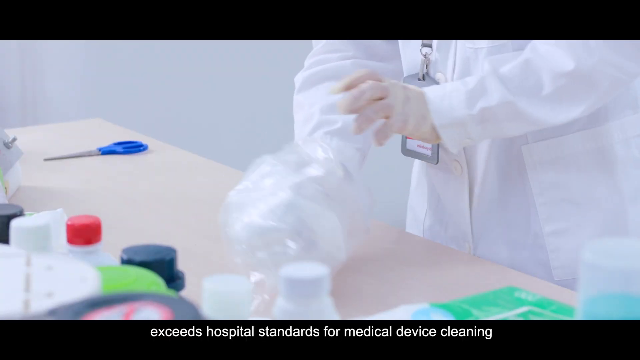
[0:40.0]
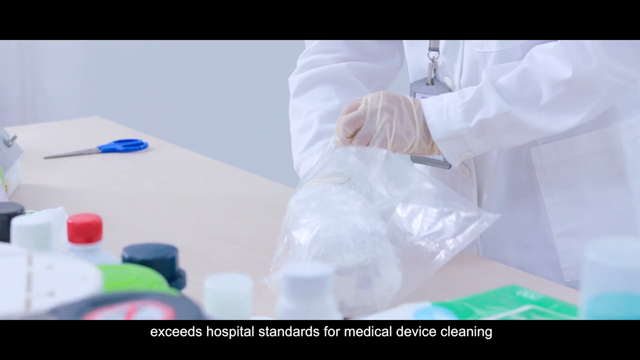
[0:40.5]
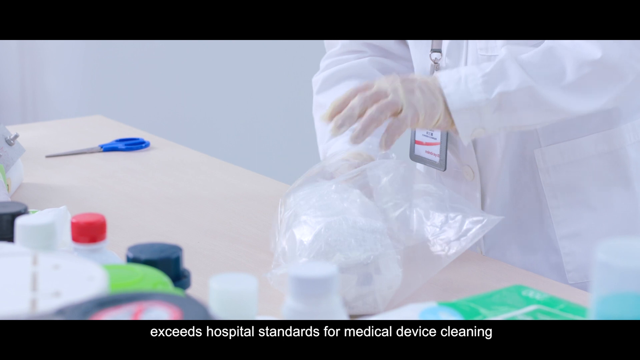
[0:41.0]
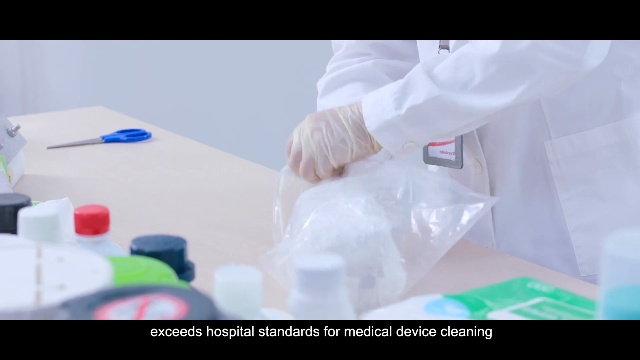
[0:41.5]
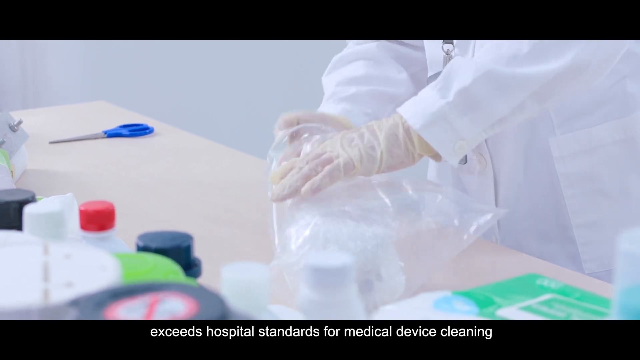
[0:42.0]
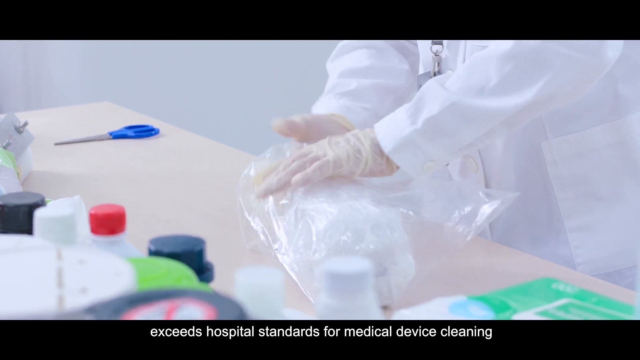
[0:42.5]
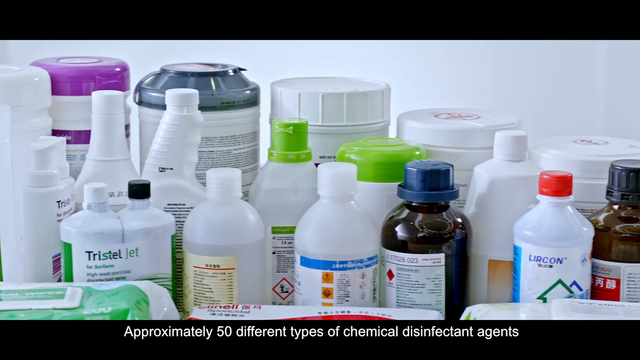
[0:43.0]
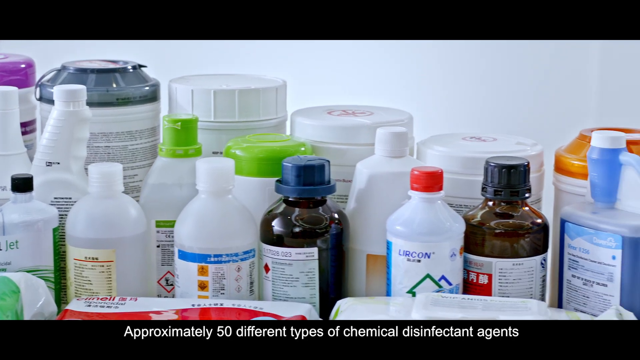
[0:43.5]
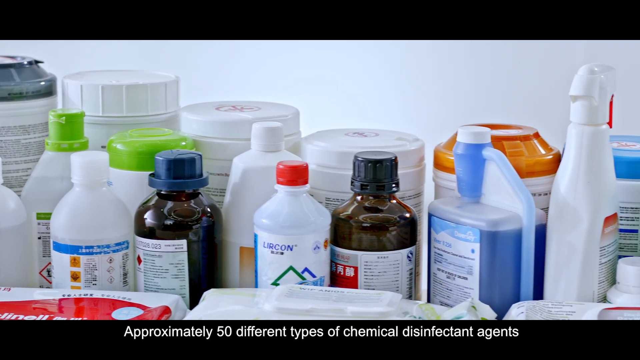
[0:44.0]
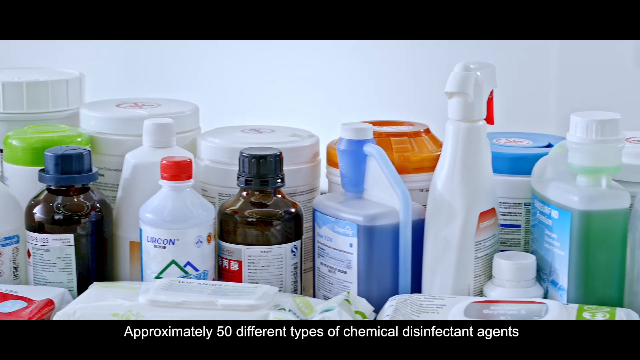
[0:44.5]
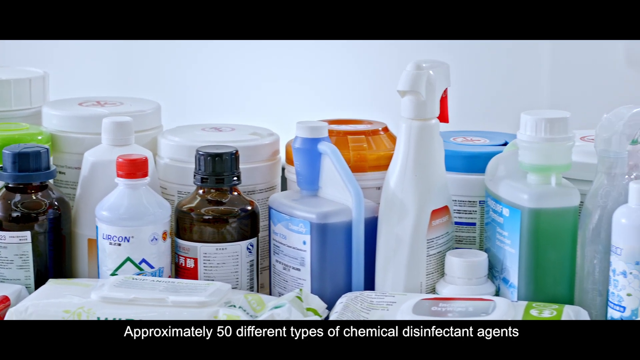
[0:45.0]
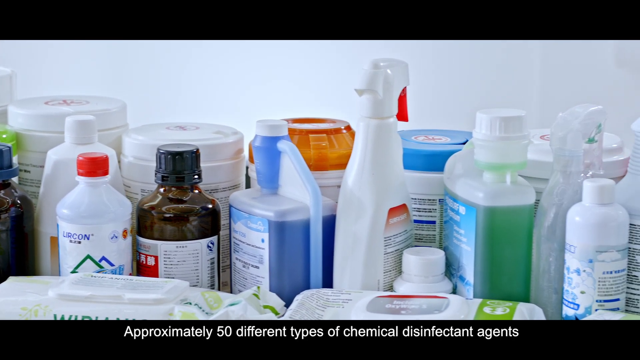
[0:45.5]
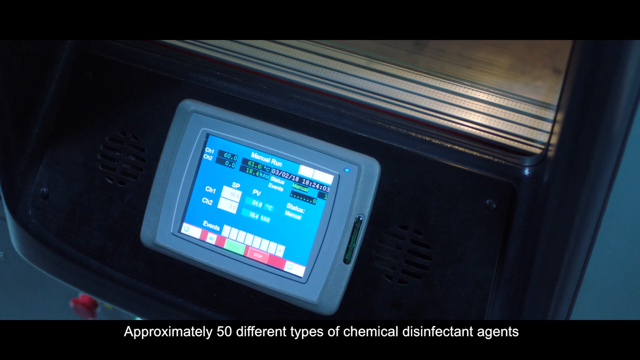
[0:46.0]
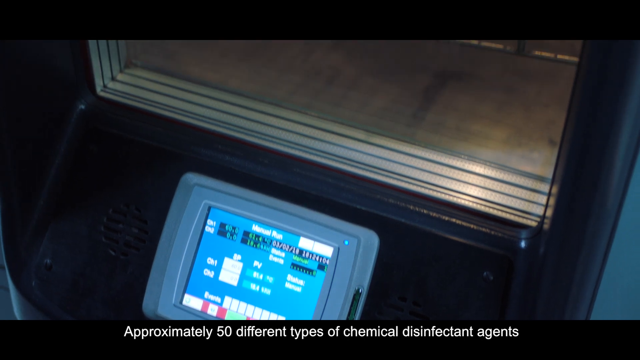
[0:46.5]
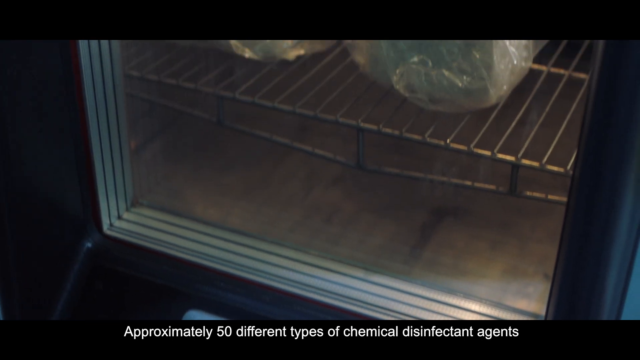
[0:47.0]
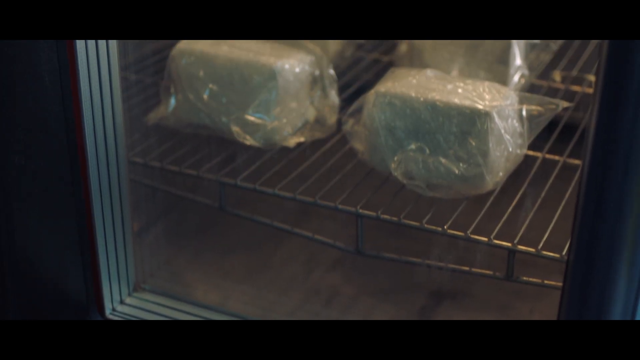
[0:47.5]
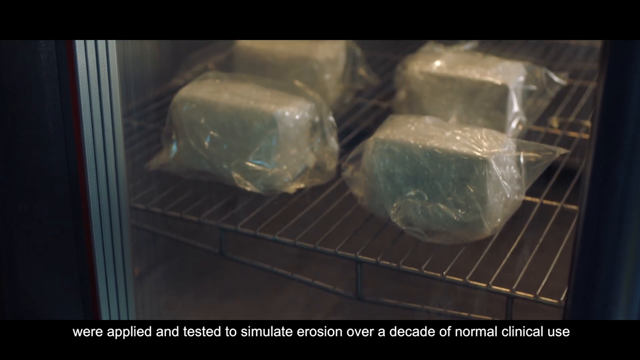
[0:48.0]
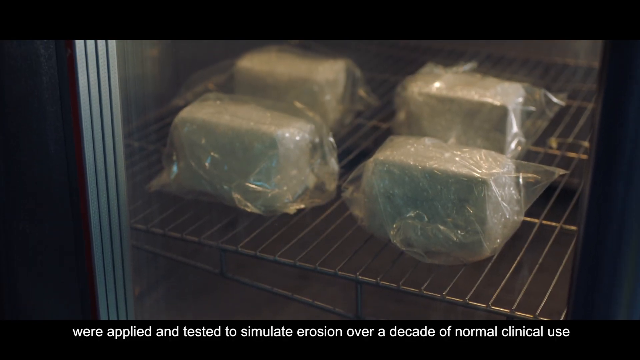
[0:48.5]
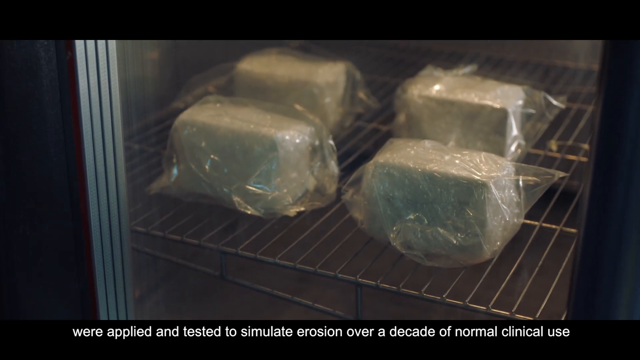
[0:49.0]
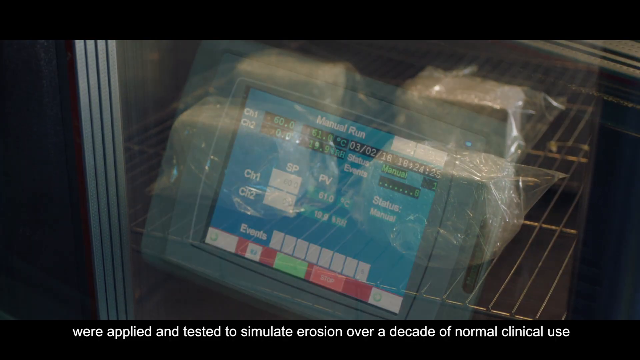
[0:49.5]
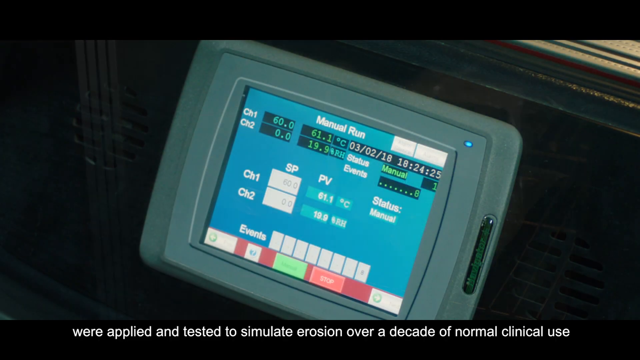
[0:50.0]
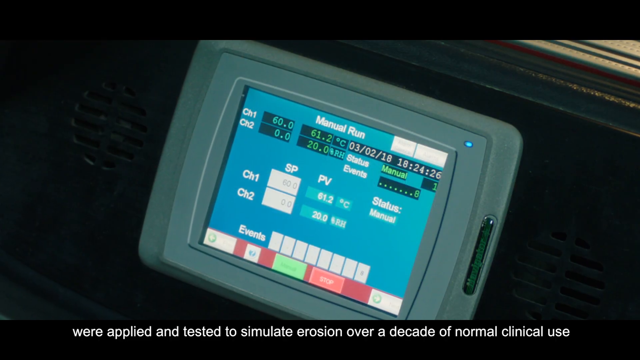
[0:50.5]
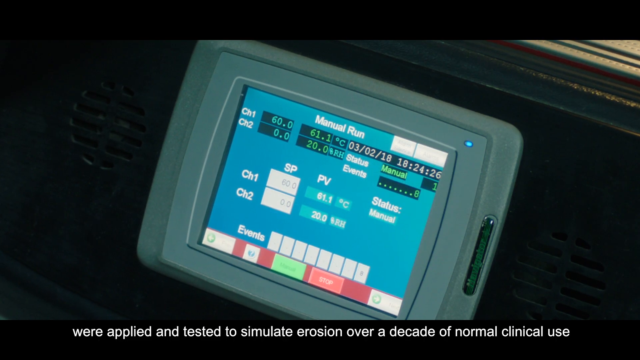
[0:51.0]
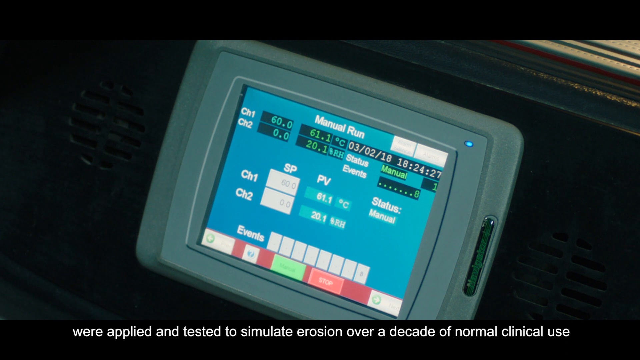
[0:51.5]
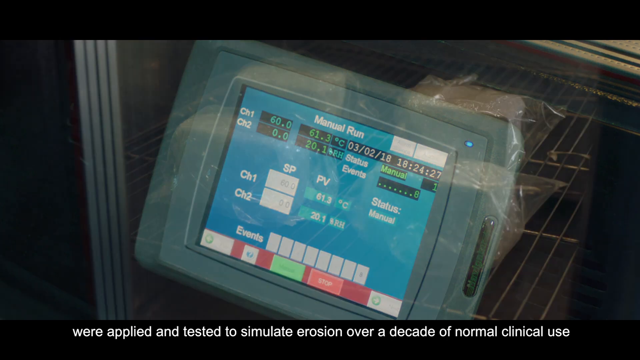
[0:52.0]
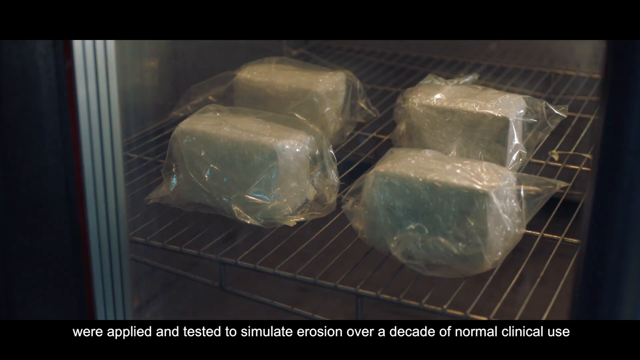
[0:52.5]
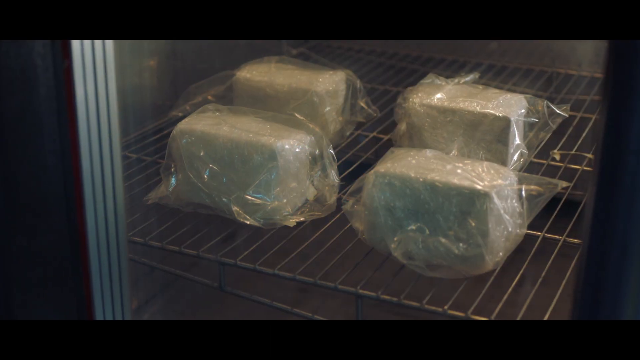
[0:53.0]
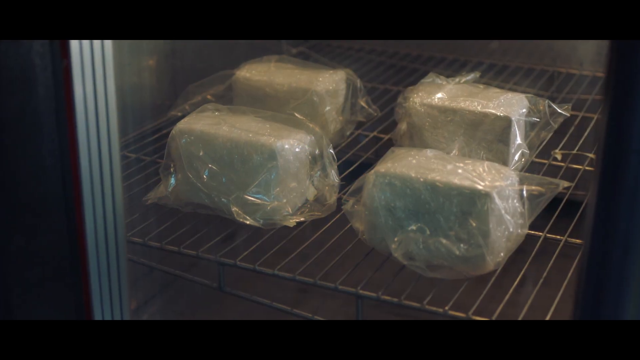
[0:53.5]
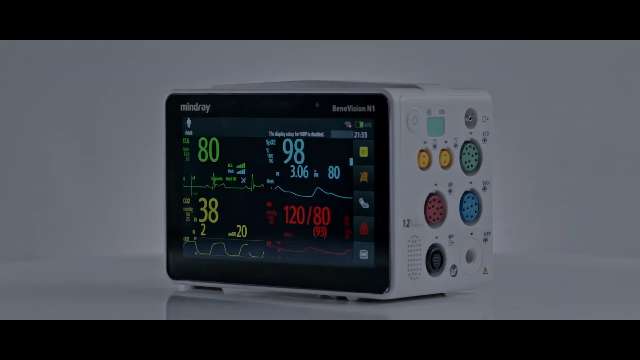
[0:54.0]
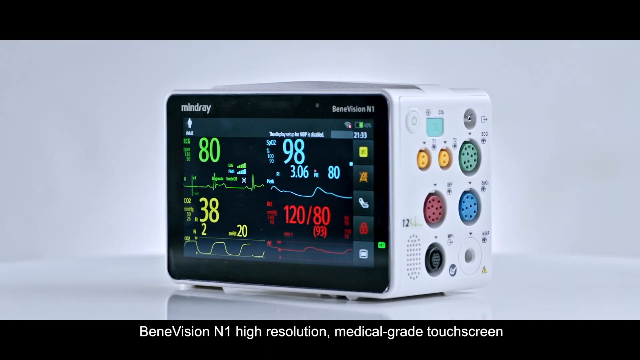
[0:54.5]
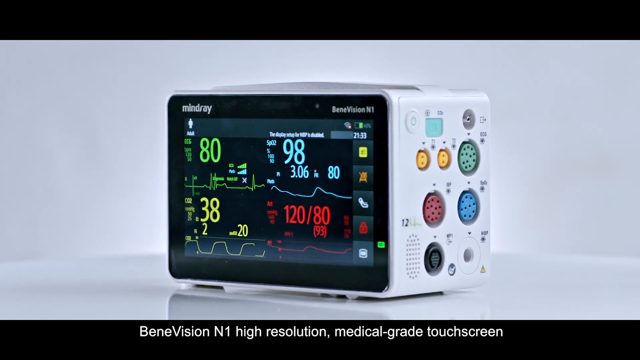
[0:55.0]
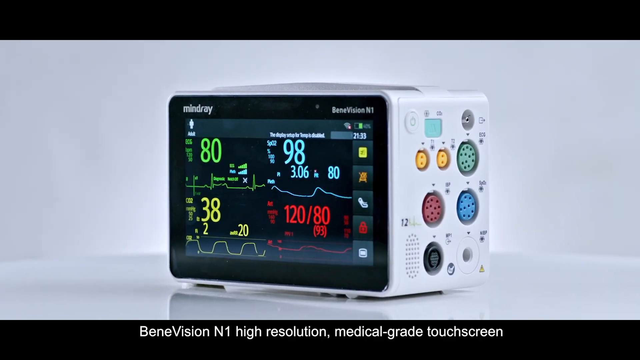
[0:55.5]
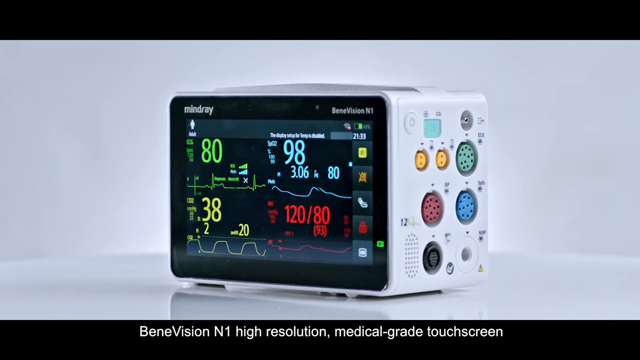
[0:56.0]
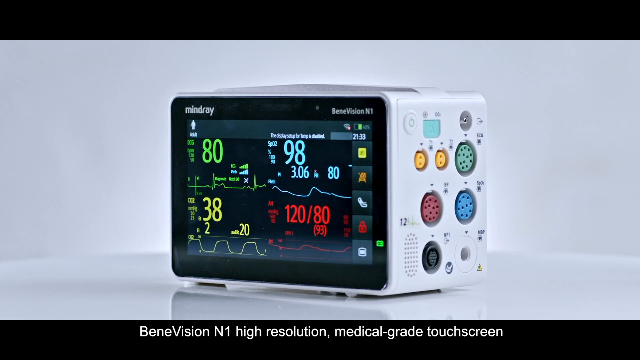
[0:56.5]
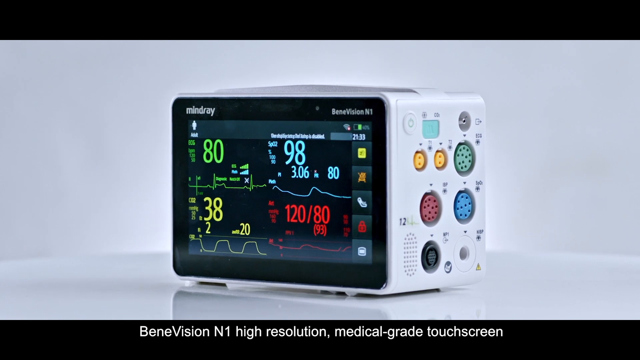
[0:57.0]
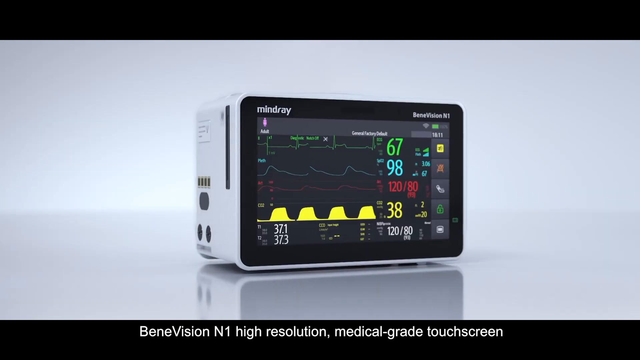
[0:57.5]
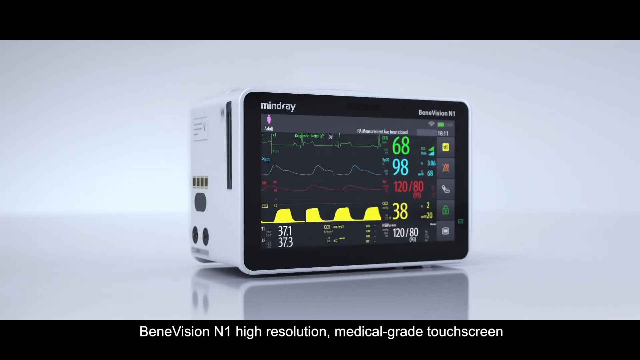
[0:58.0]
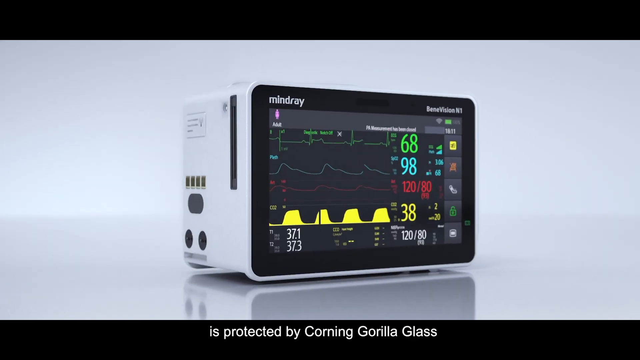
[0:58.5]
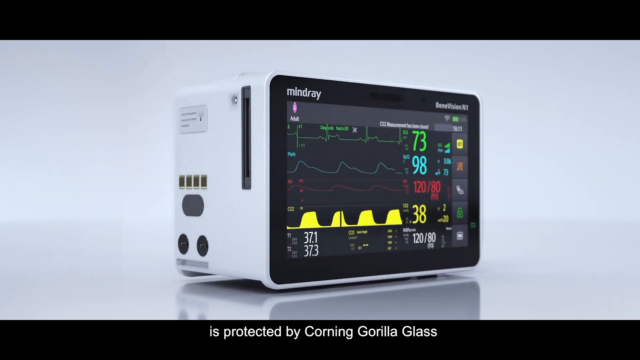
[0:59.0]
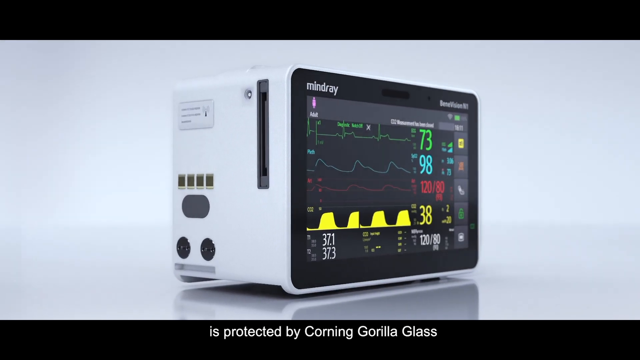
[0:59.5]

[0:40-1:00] People handling the machine put it in a plastic bag and wrap it up, wearing white gloves while they do so. Text then reads "Approximately 50 different types of chemical disinfectant agents were applied to and tested to stimulate erosion over a decade of normal clinical use." A large number of products, apparently those used and tested on the device, scroll from left to right. The product is then shown again in what appears to be the same environment as at the very beginning of the video.